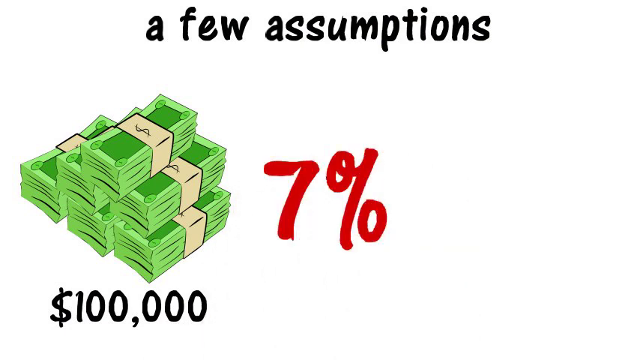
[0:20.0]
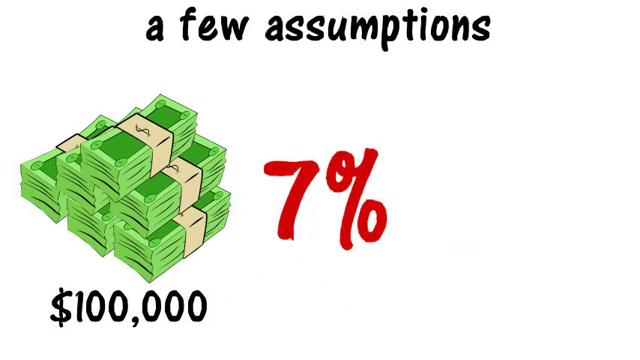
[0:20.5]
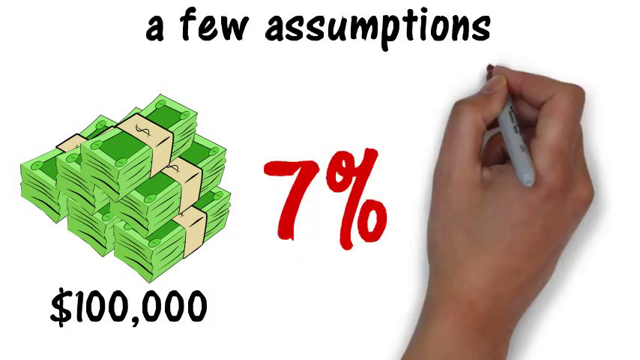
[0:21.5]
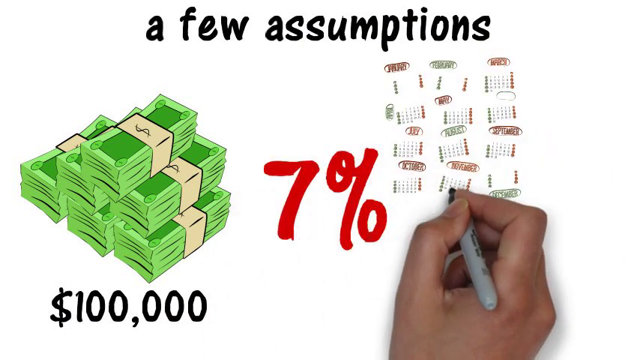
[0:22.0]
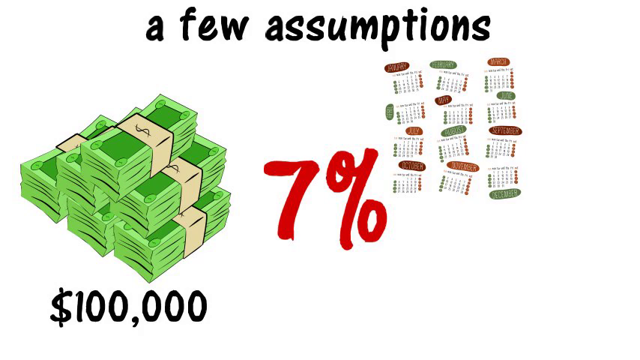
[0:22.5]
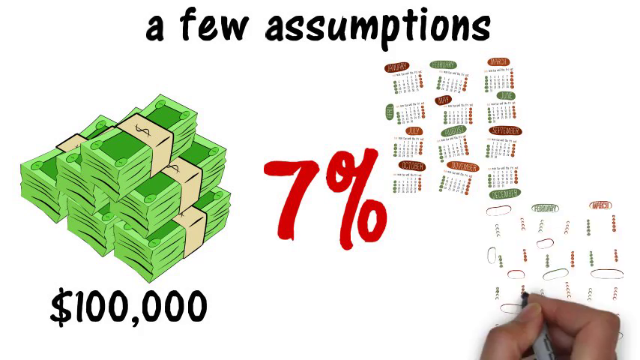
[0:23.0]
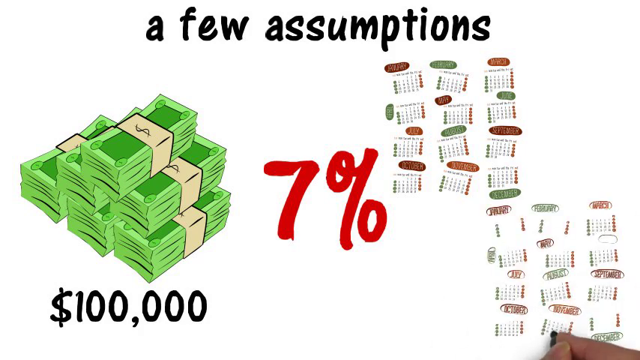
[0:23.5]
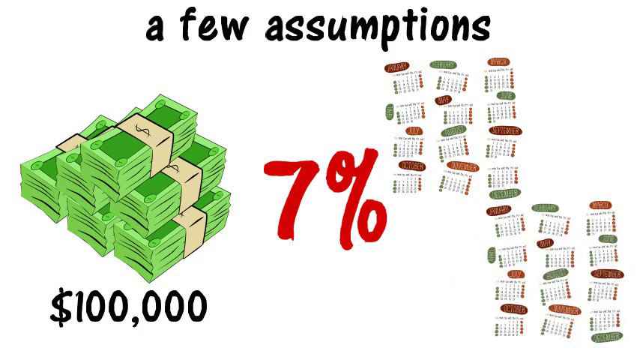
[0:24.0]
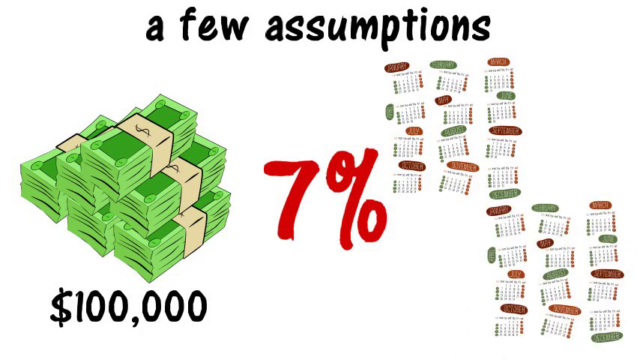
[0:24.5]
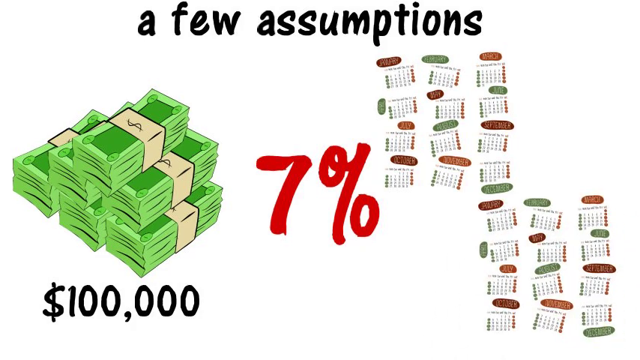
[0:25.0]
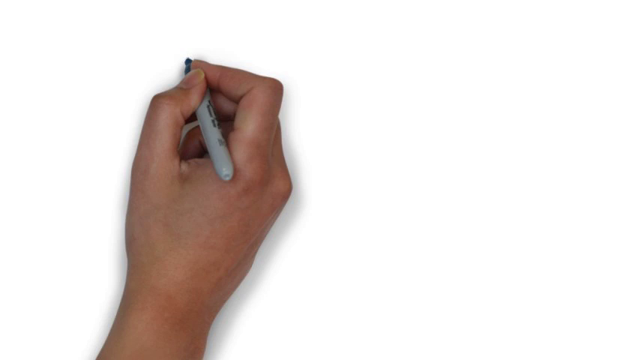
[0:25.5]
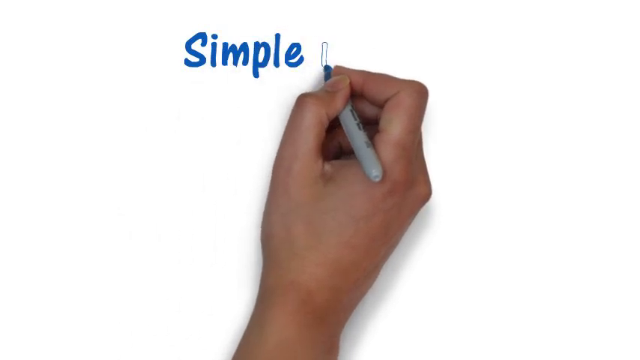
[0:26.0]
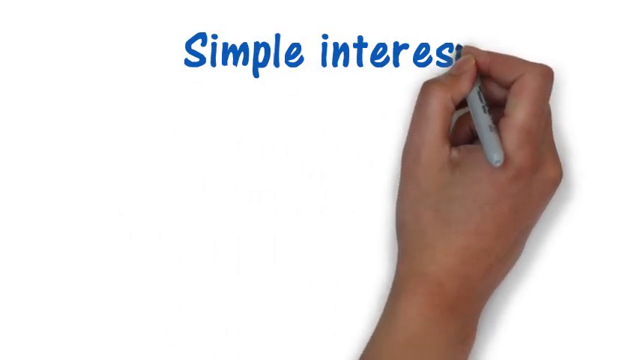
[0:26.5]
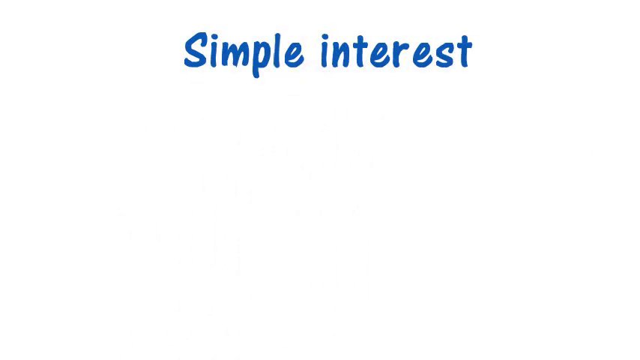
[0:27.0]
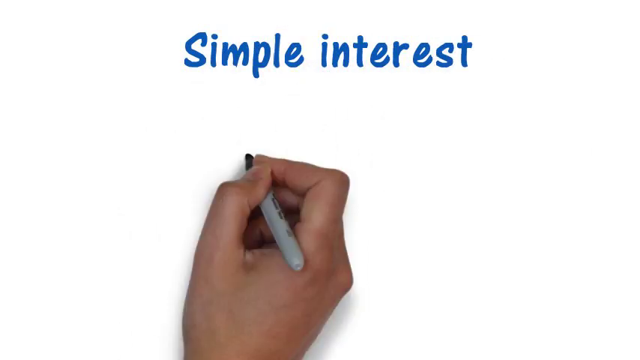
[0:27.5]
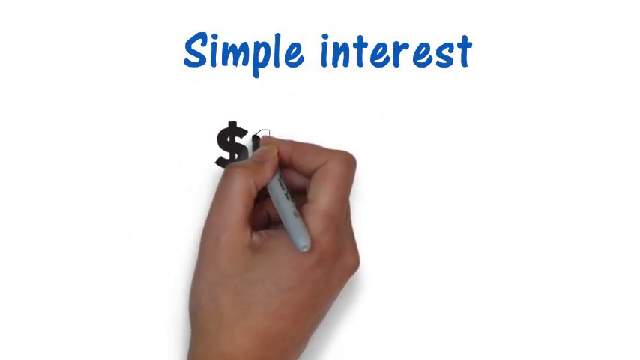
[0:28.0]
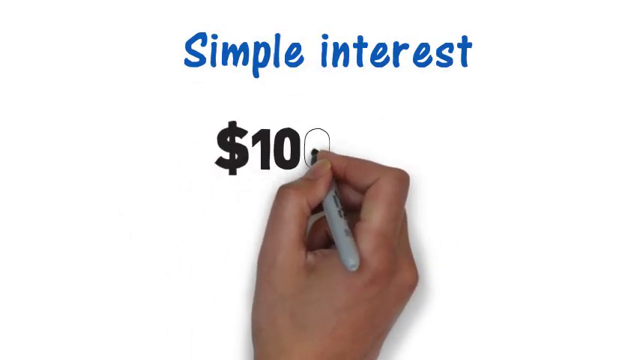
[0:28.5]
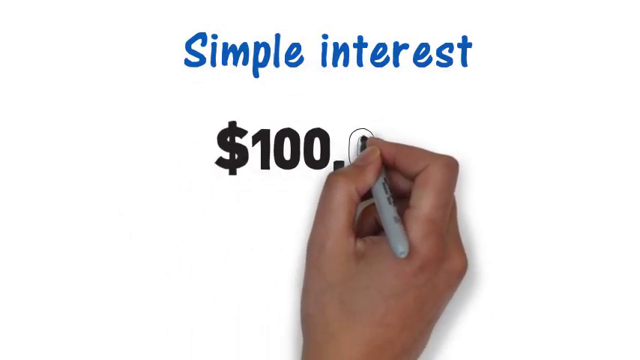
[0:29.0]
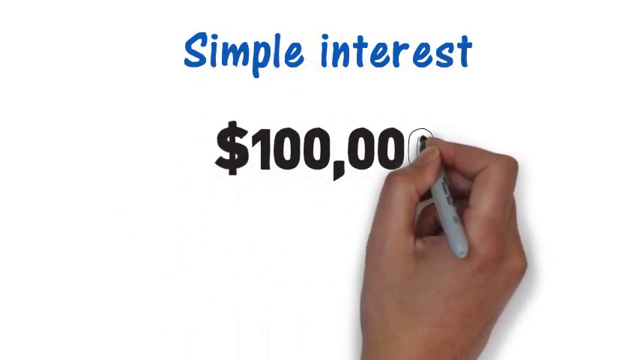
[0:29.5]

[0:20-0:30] The pile of money with "$100,000" below it remains on screen. On the right there is a very large "7%", and multiple small calendars begin to be drawn on the right. The scene changes, and the hand in the center of the screen writes the title "Simple Interest" and "$100,000" in the center of the screen. The video appears to explain how interest works on money.